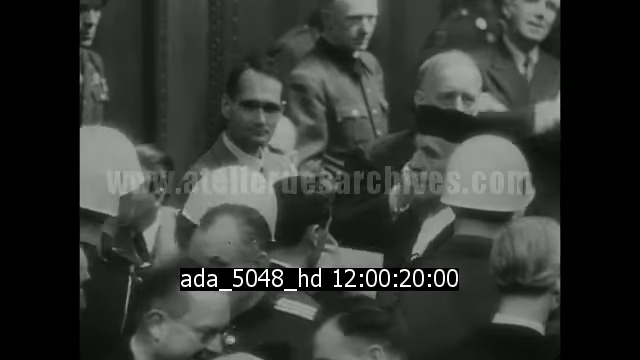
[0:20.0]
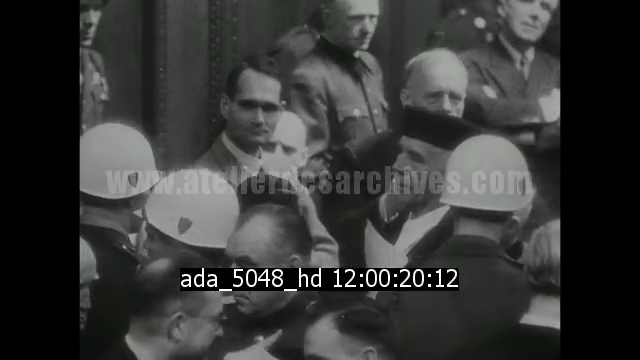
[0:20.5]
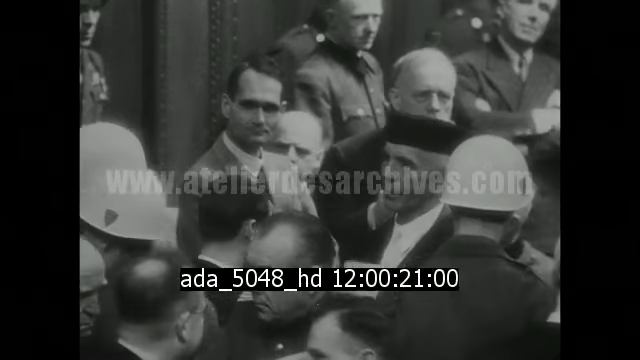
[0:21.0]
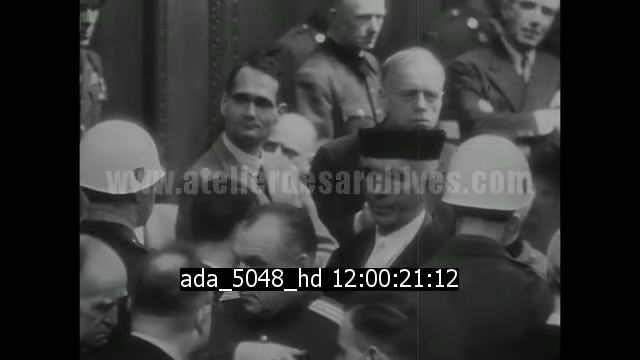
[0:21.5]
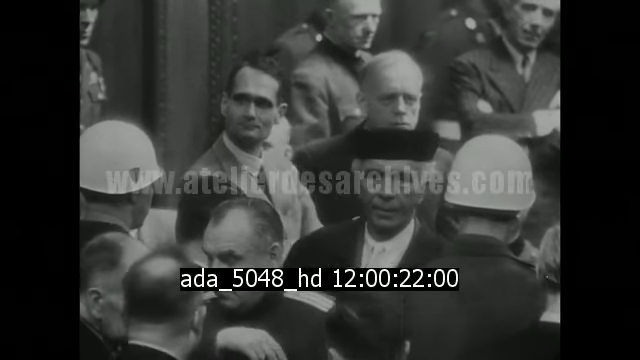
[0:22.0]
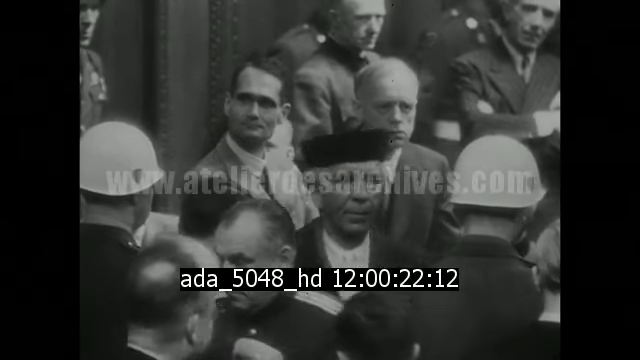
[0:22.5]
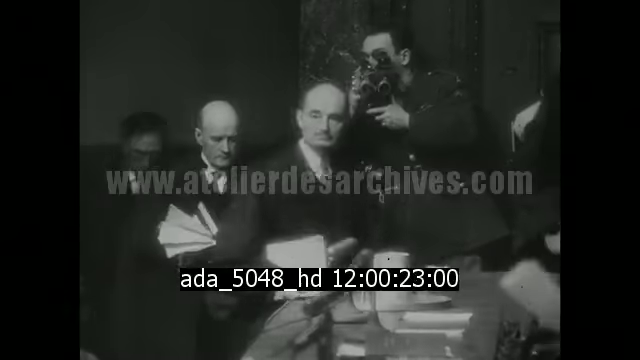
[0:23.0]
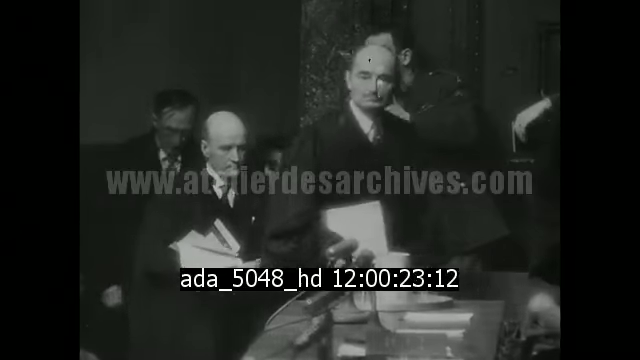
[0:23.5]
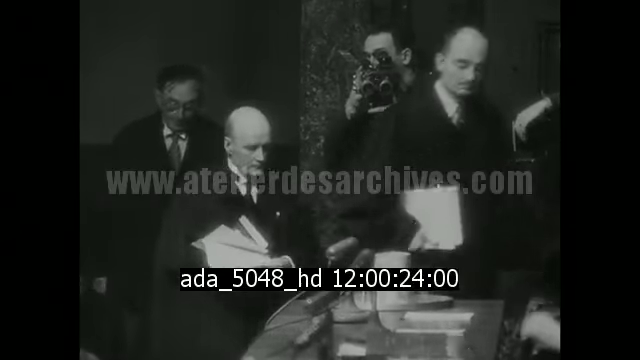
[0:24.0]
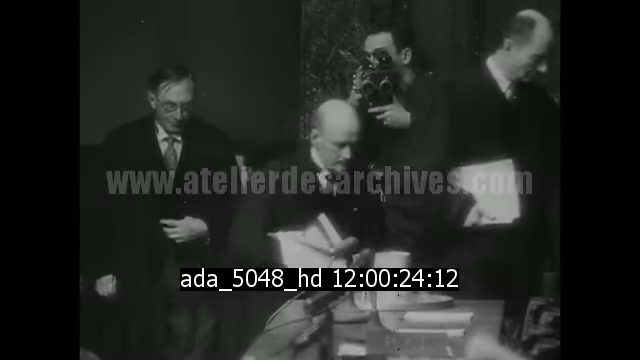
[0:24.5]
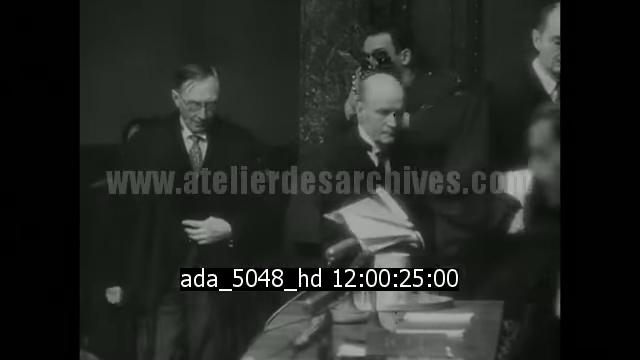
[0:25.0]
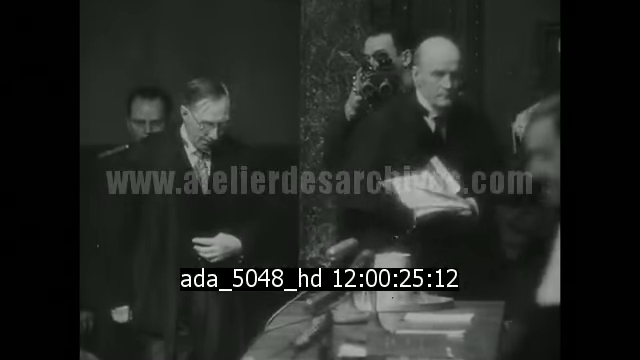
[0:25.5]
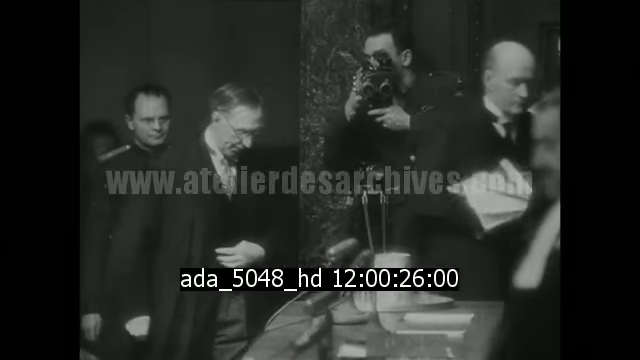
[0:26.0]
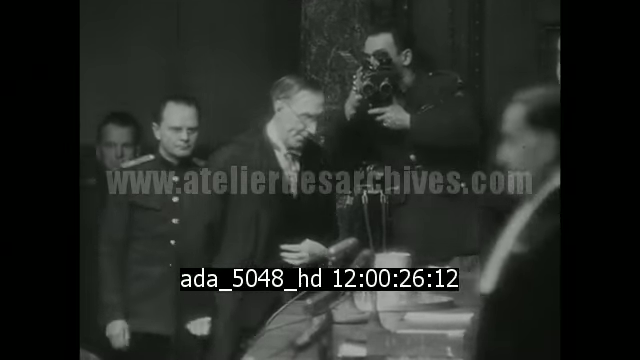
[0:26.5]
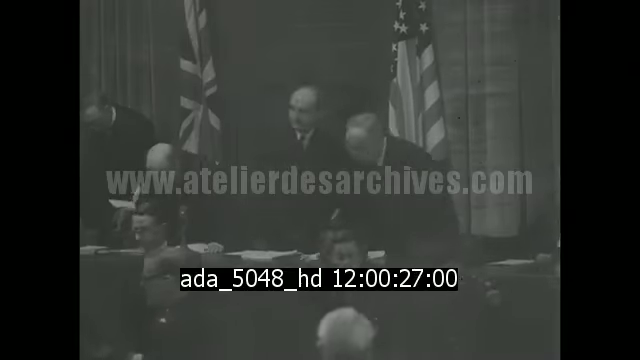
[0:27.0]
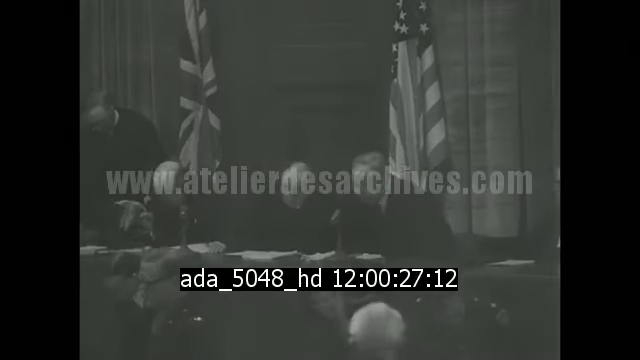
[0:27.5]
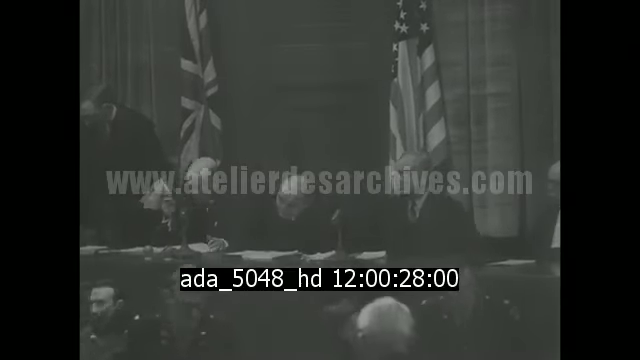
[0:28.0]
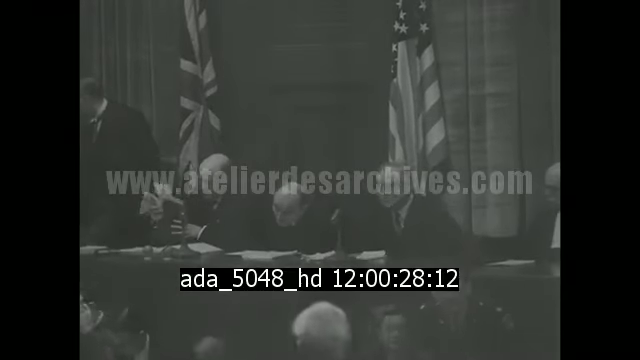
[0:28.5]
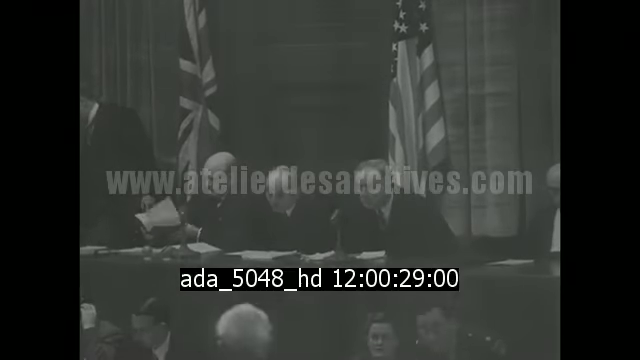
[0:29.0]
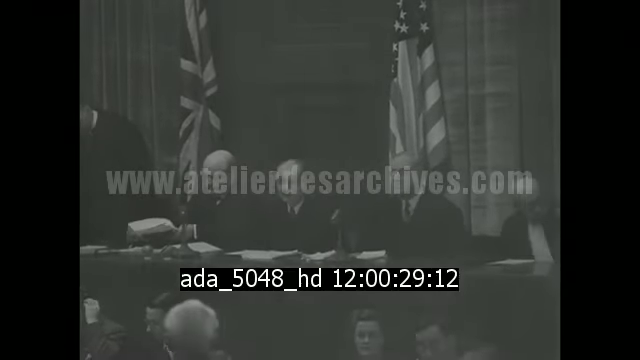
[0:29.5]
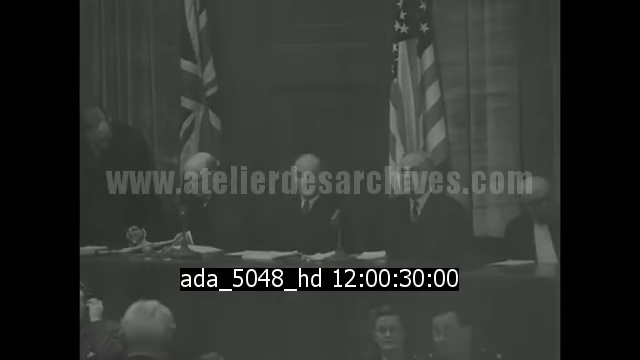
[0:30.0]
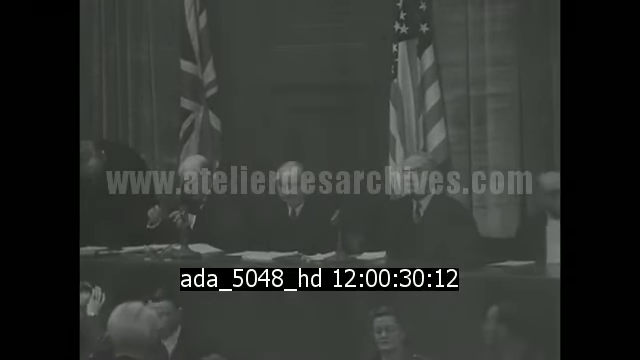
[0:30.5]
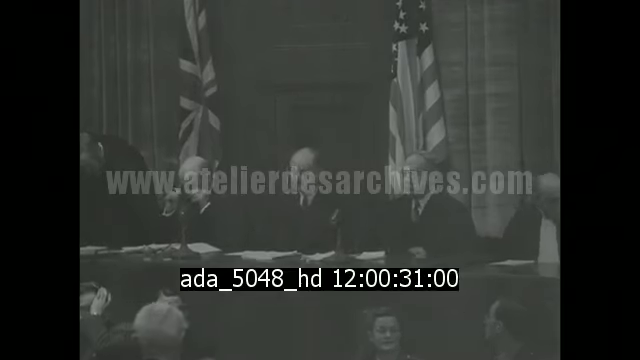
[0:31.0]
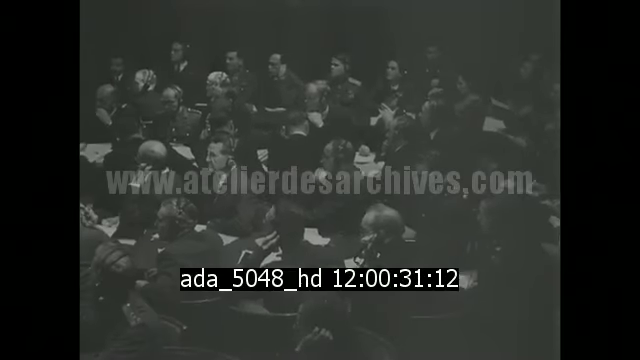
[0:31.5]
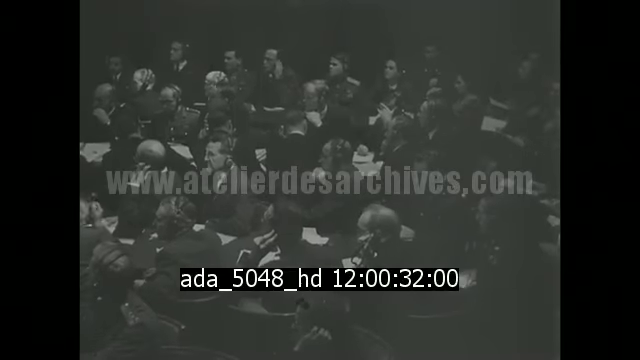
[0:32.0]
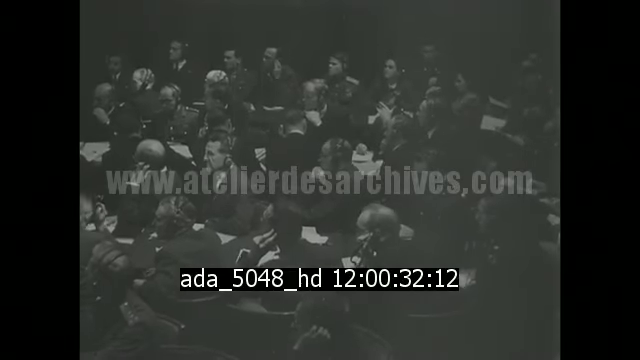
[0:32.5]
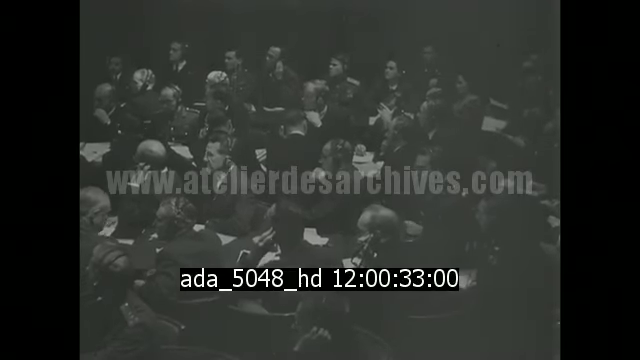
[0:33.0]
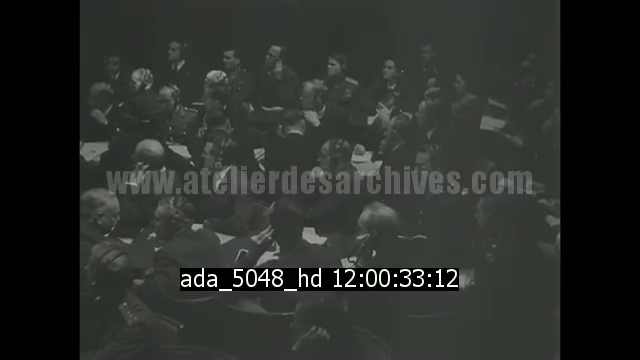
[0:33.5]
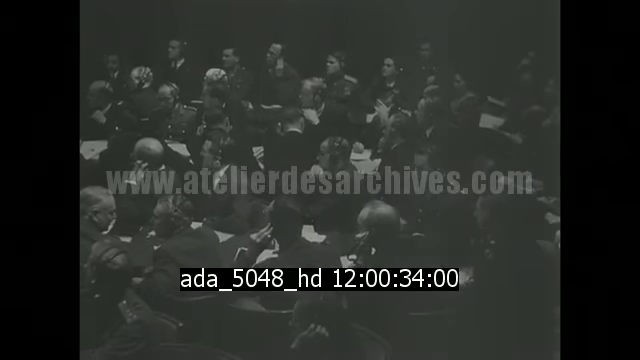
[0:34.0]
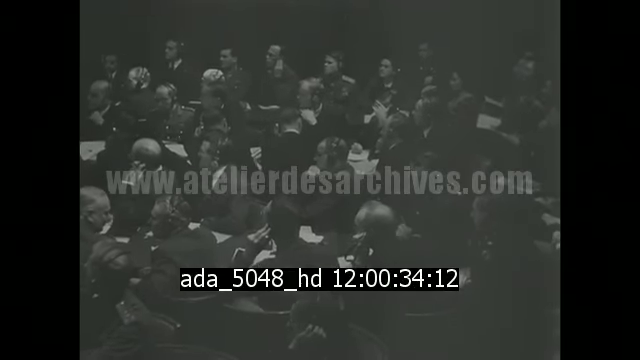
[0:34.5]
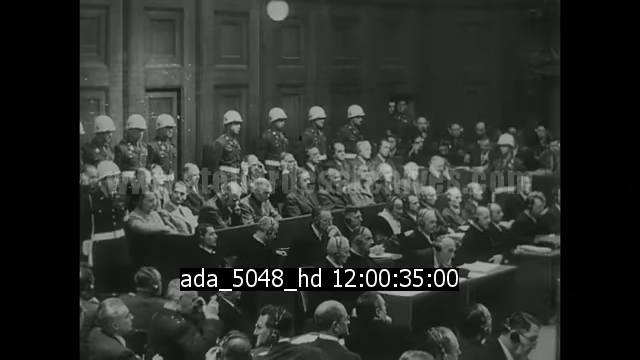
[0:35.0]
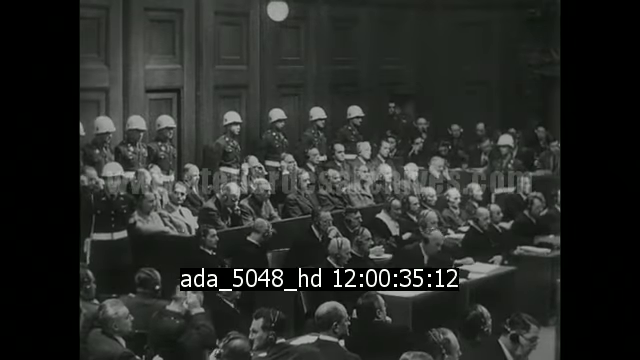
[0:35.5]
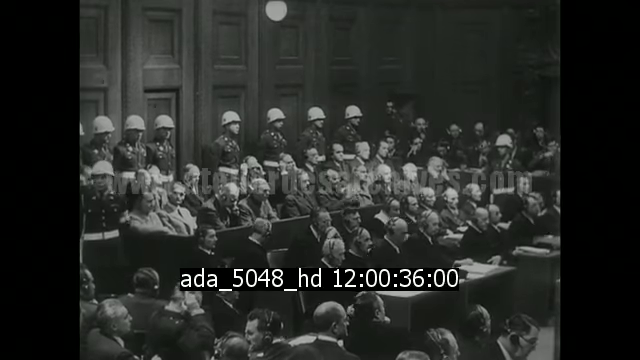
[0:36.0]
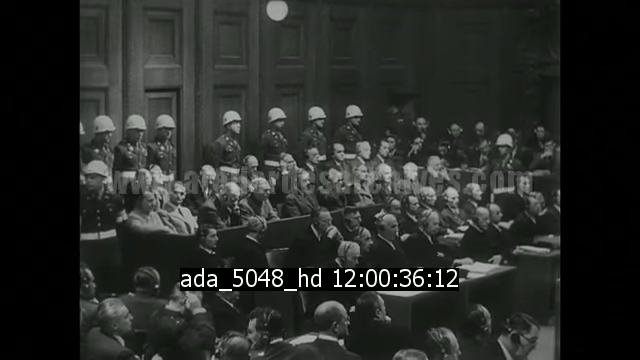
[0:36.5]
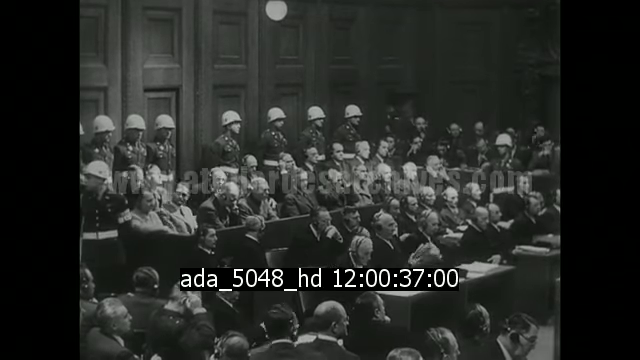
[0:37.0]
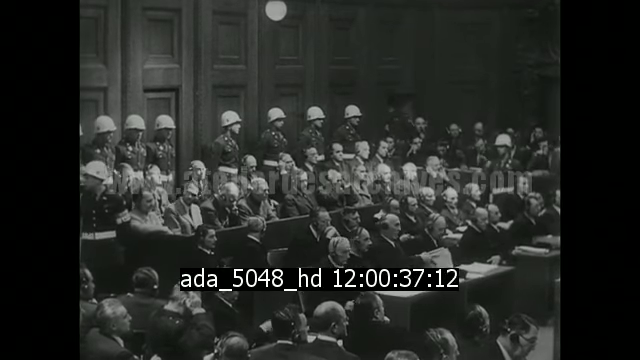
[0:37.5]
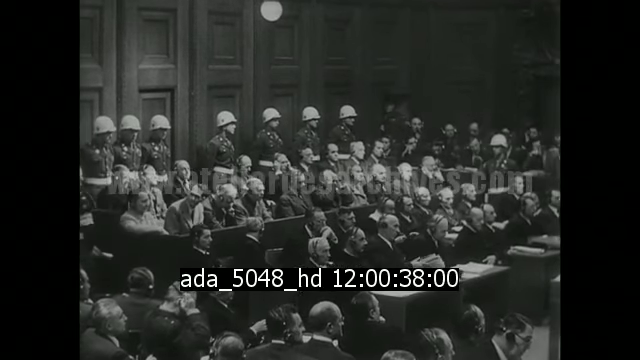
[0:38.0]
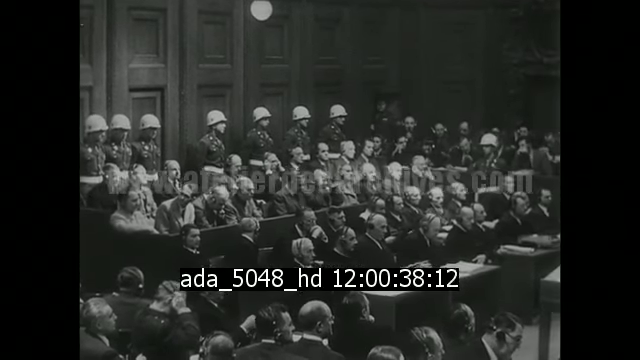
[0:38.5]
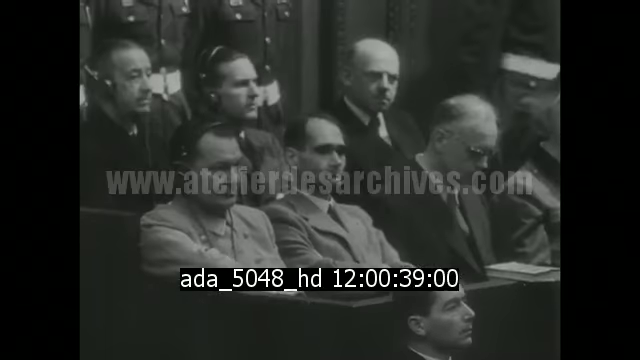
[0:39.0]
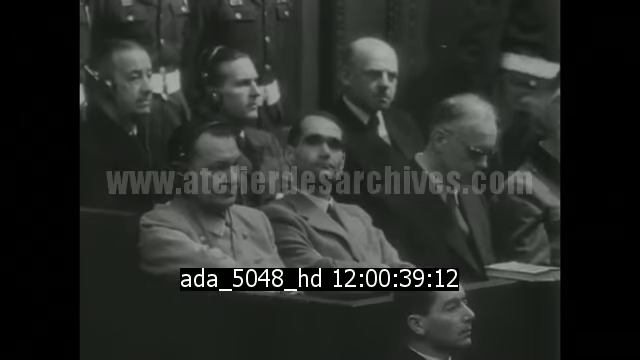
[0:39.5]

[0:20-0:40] Soldiers are present at the Nuremberg trials. American and British flags are visible in the background. Many soldiers and servicemen are in the area, together with other people who are watching and observing the trials.